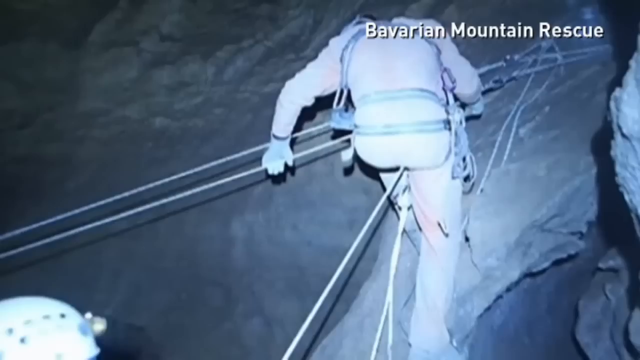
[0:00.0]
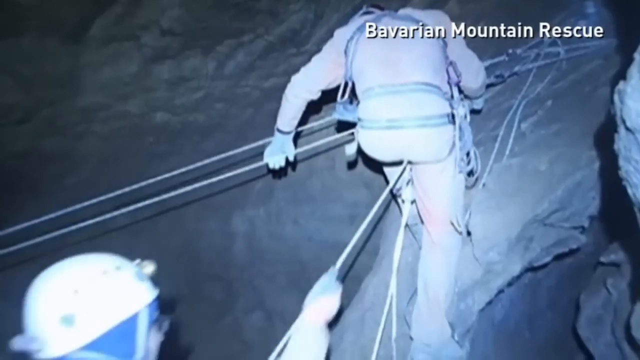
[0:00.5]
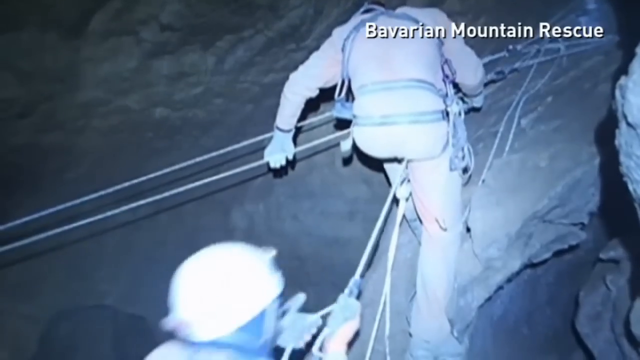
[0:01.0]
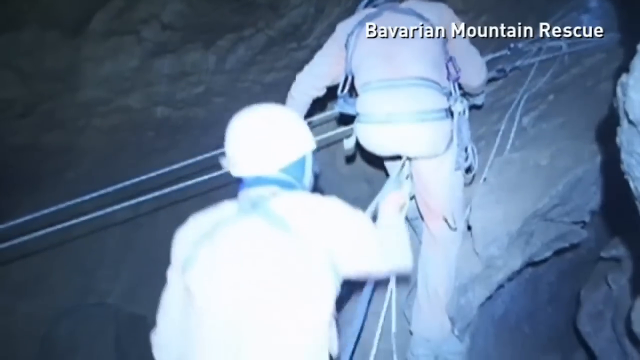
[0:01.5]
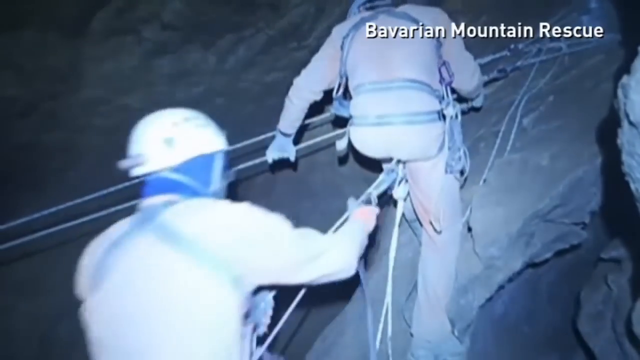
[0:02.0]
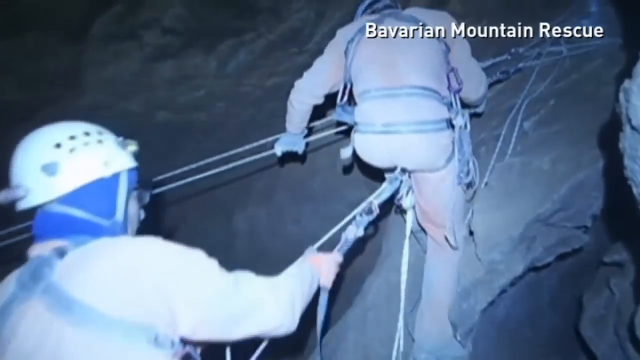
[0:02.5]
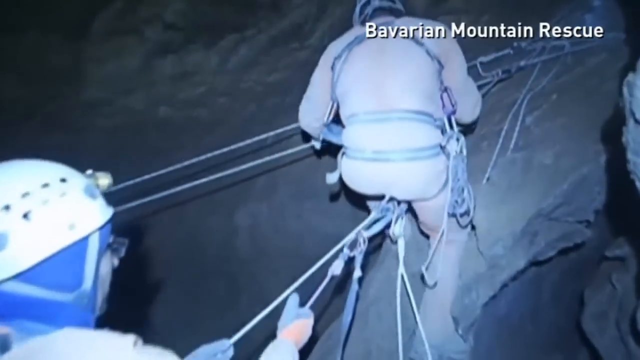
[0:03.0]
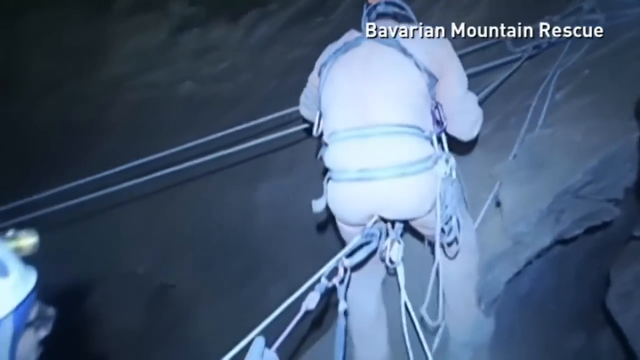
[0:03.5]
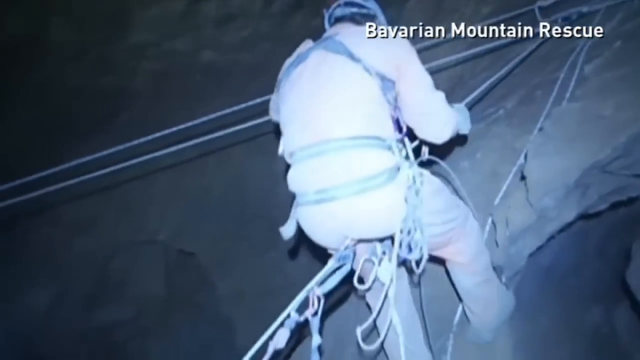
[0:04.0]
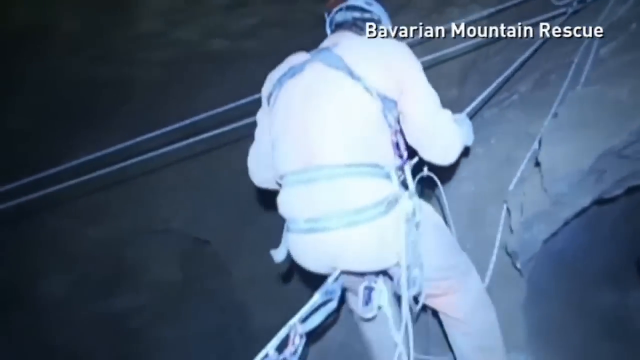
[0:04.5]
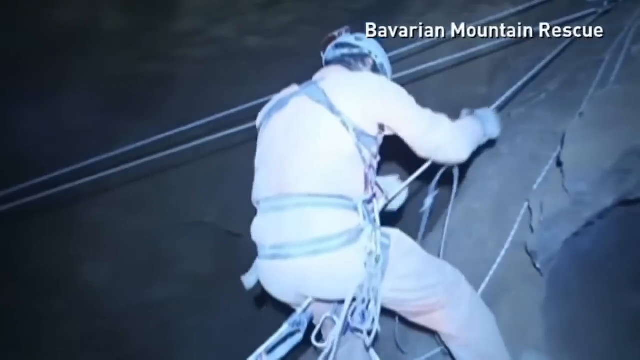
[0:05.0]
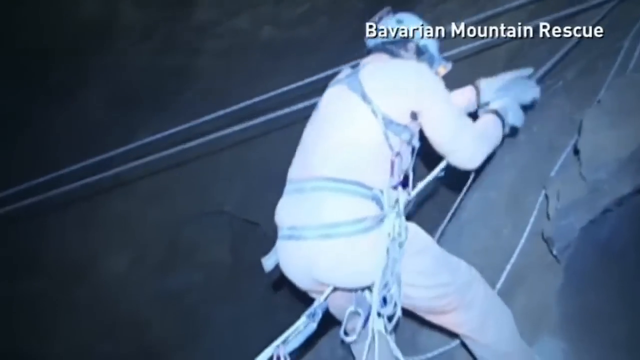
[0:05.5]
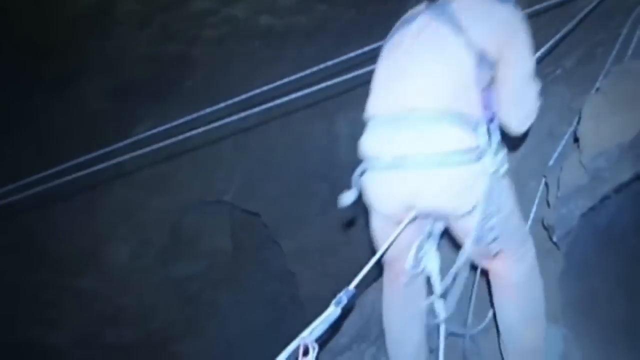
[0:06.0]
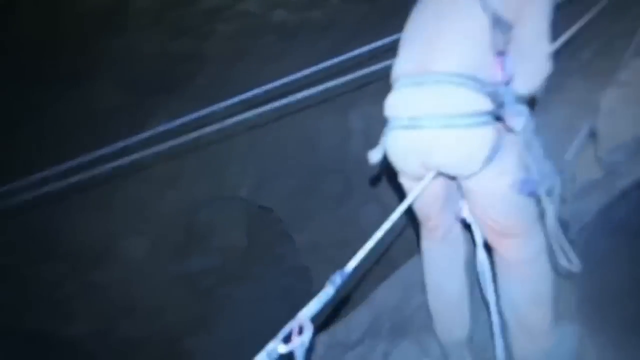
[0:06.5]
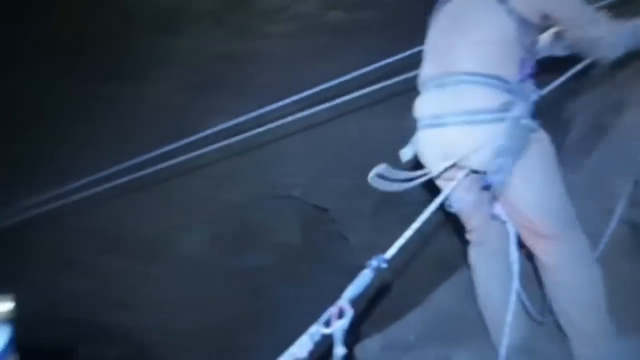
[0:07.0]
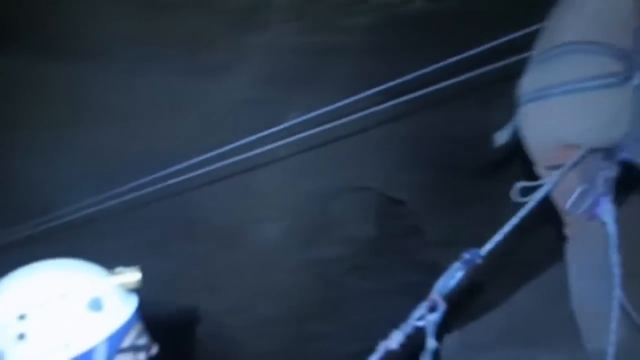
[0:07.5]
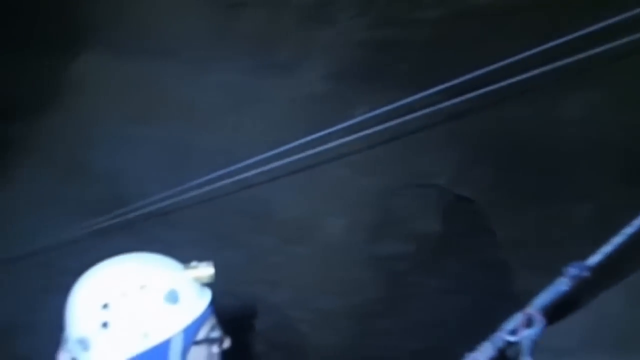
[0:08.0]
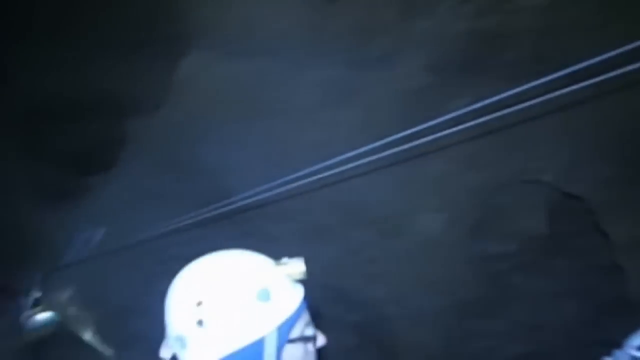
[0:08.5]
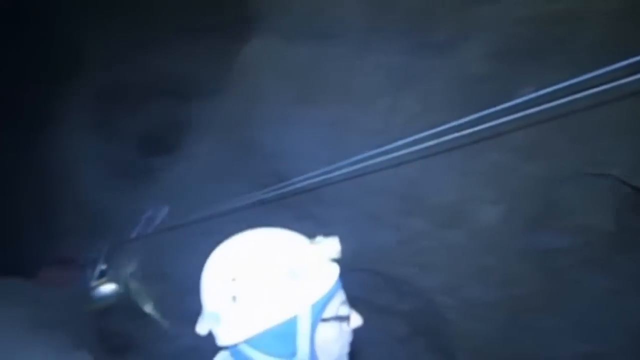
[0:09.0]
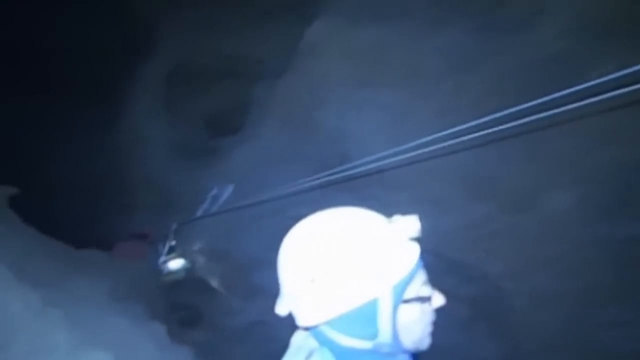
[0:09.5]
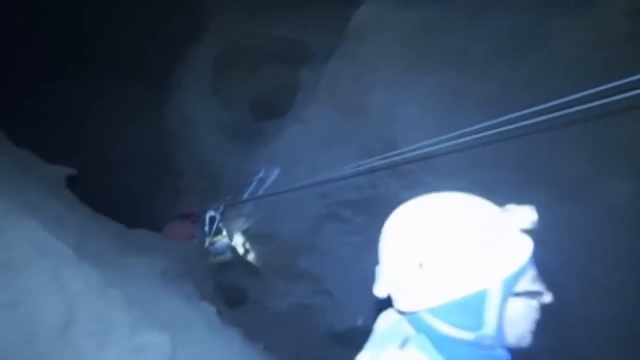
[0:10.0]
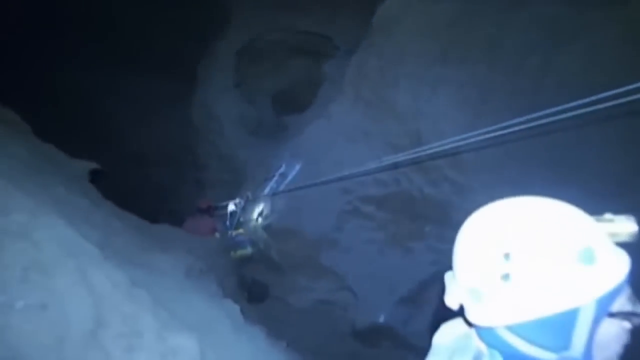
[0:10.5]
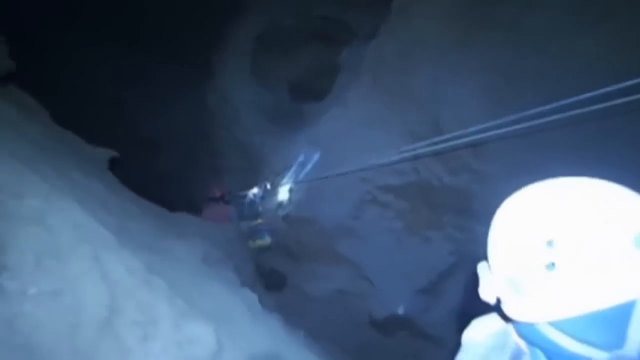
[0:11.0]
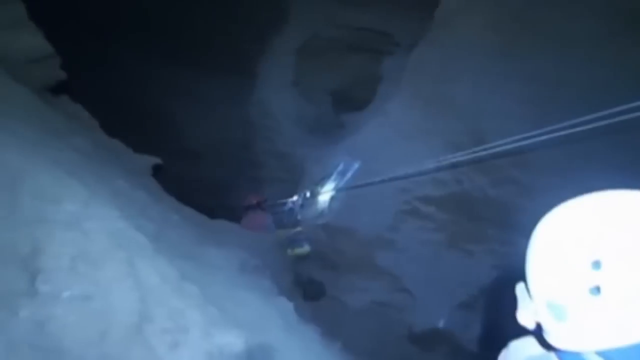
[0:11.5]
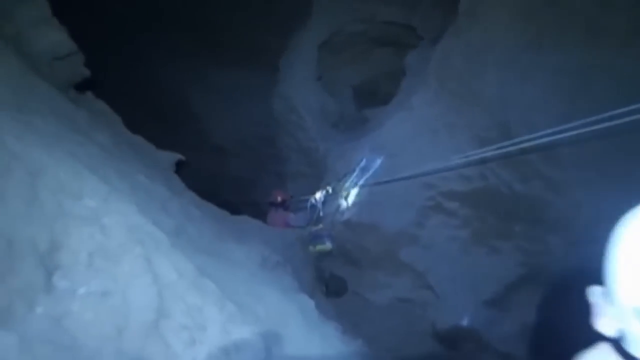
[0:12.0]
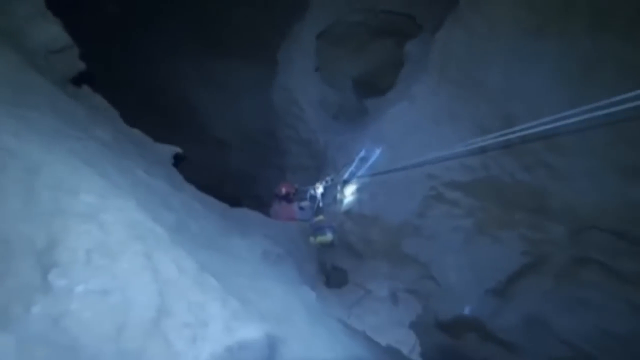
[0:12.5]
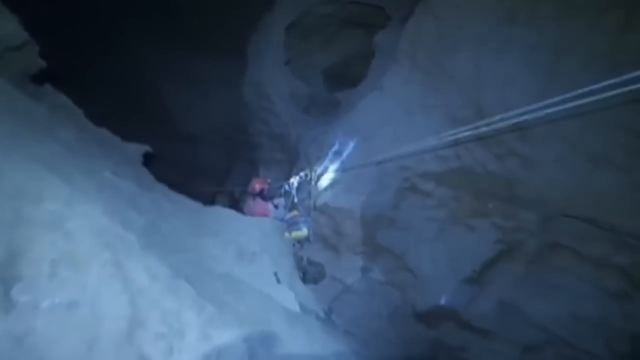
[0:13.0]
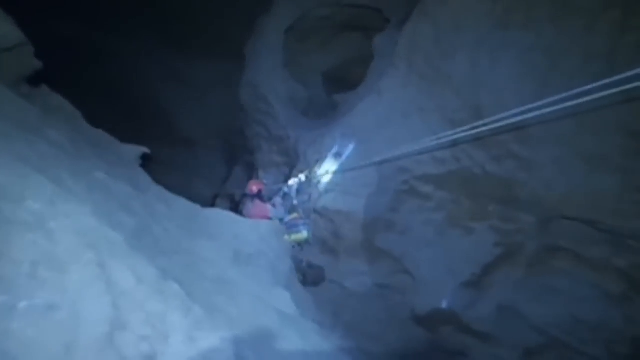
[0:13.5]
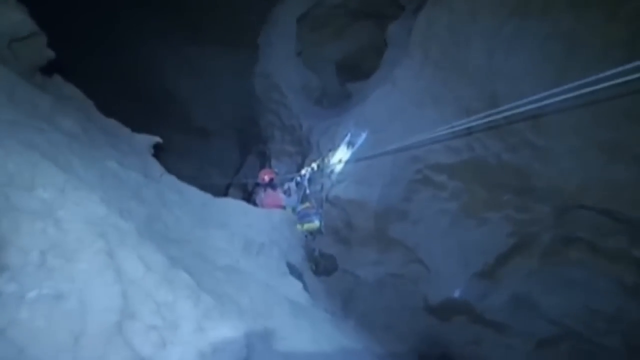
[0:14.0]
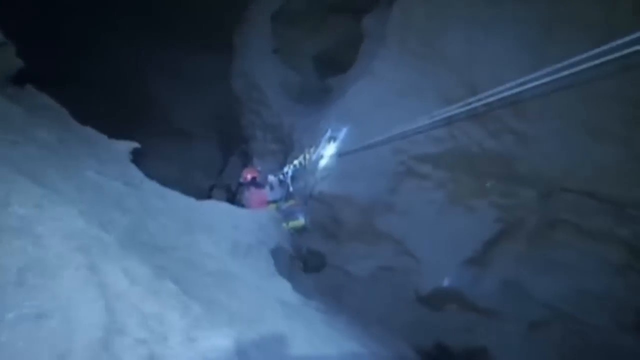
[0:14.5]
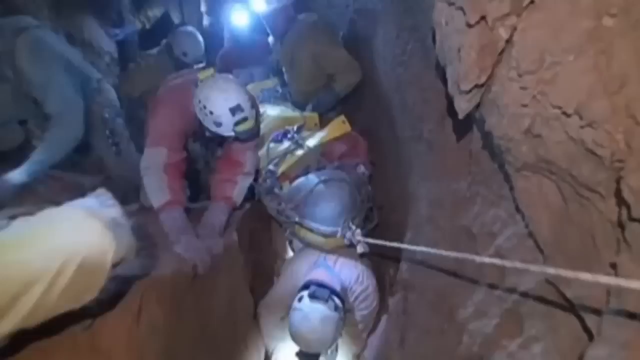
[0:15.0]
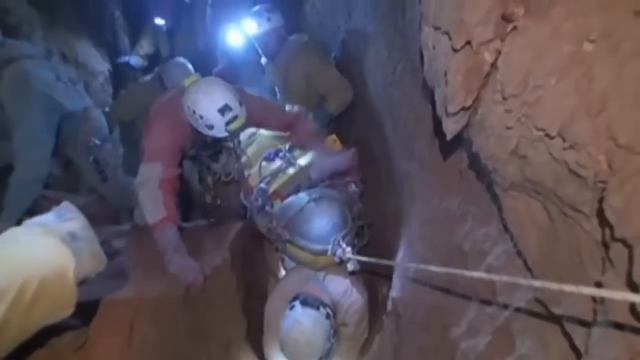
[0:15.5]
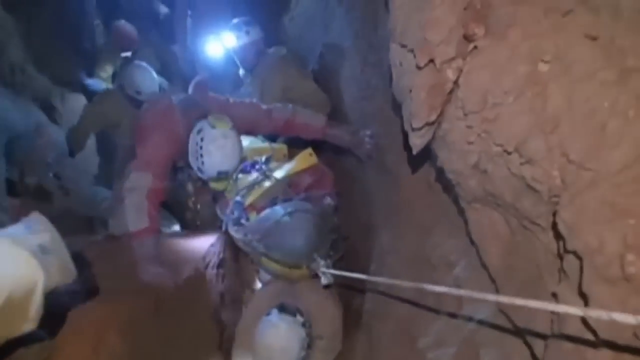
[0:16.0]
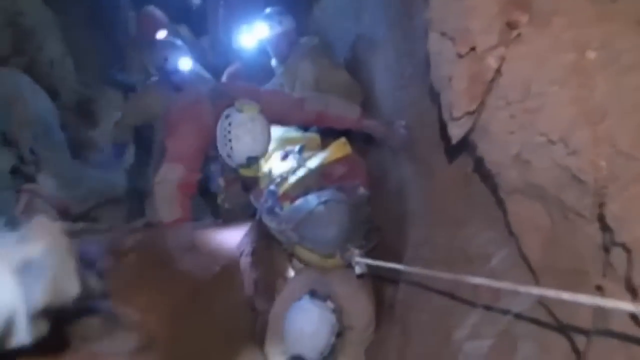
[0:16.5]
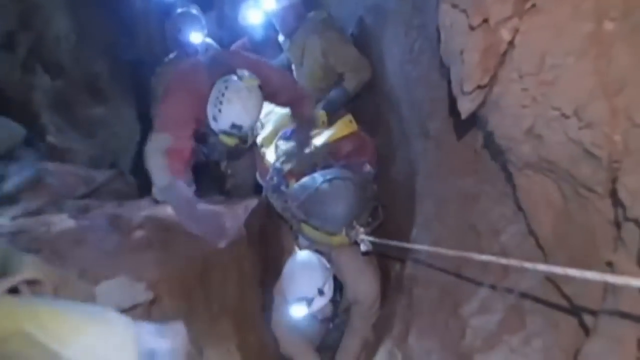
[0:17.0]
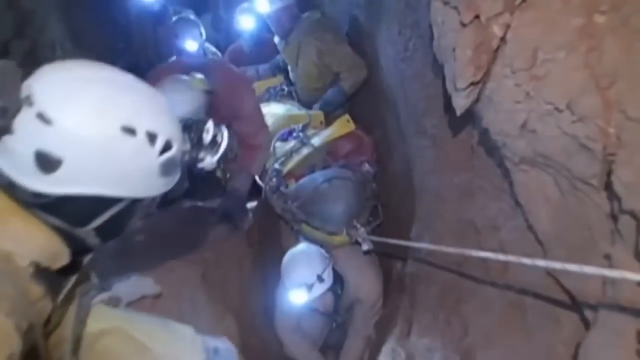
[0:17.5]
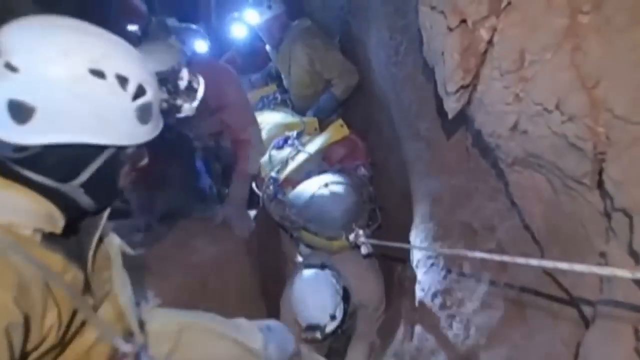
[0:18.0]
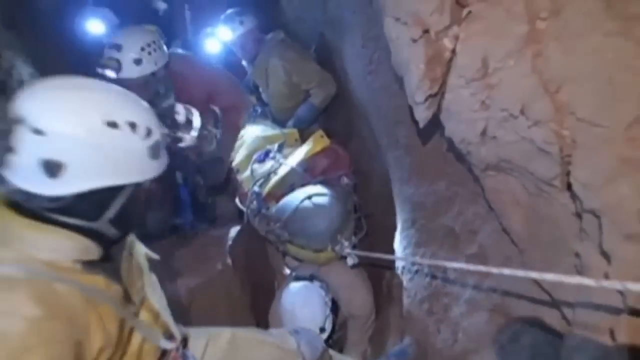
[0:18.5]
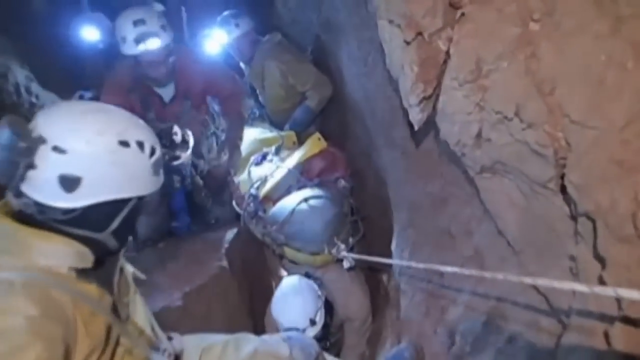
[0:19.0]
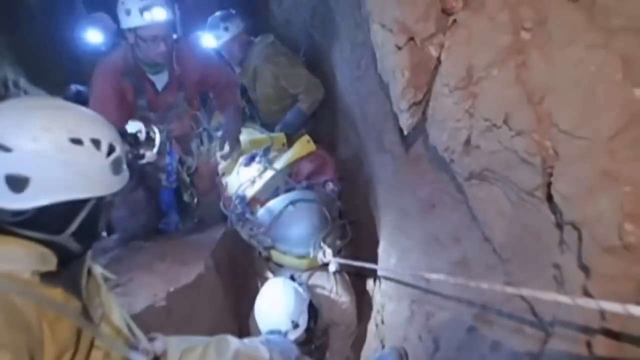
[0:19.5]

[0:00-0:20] The scene takes place in a cave. Text in the upper right corner reads "Bavarian Mountain Rescue," and the footage appears to show an attempted rescue inside a cave system. Various rigging and pulley systems with ropes and carabiners are attached to the cave walls. A person strapped into multiple cables is up above in the image, sort of rappelling a little way down, while another person in a hard hat is behind them, kind of holding a line steady. The camera pans to look deeper down into a hole in the side of the cavern, where a line of rope goes deeper into the cave toward another person further down. This person wears a red hard hat with their flashlight on and is deeper in the cave than the first people. The scene transitions to a more cramped area where multiple people with hard hats and flashlights on their heads are kind of gathered, huddled in a smaller space.